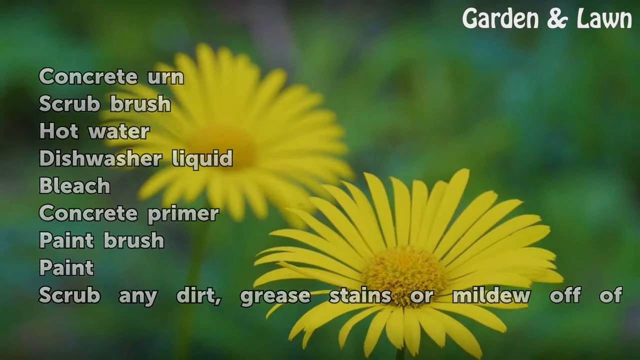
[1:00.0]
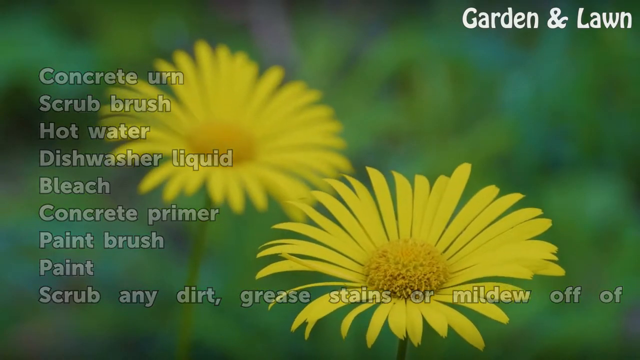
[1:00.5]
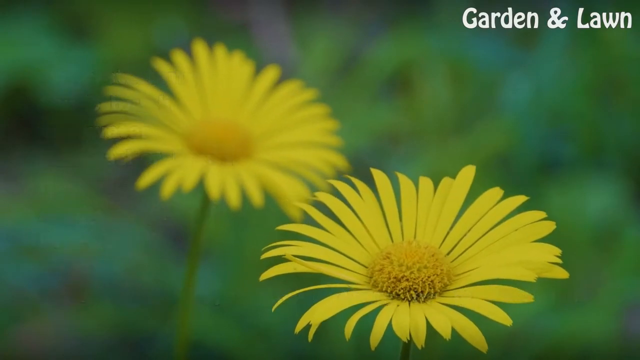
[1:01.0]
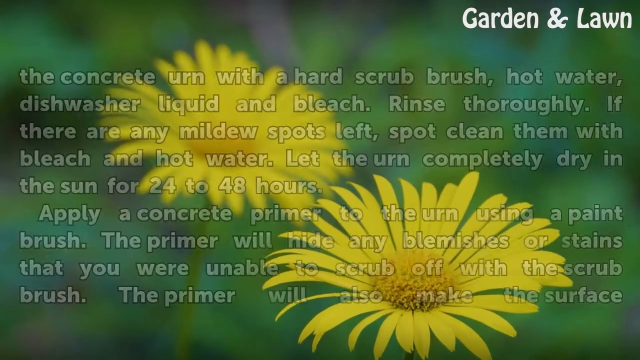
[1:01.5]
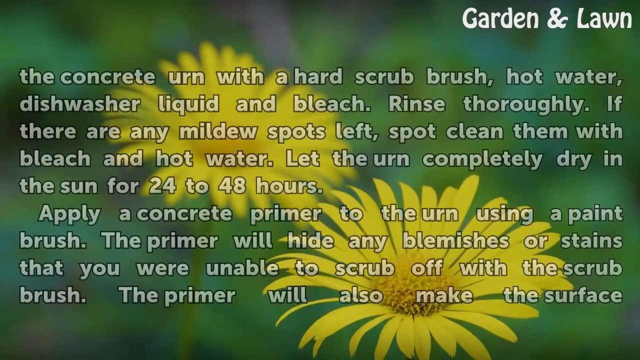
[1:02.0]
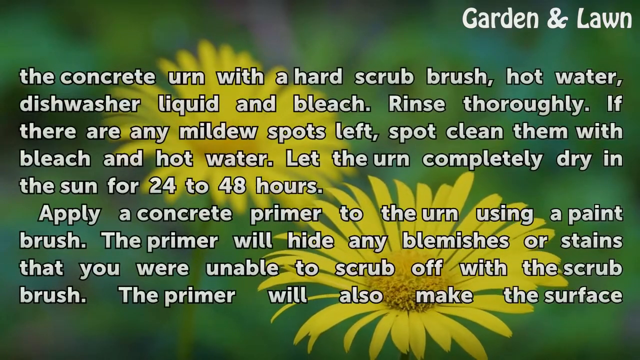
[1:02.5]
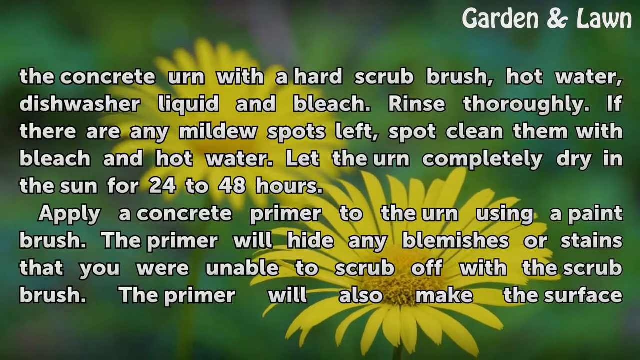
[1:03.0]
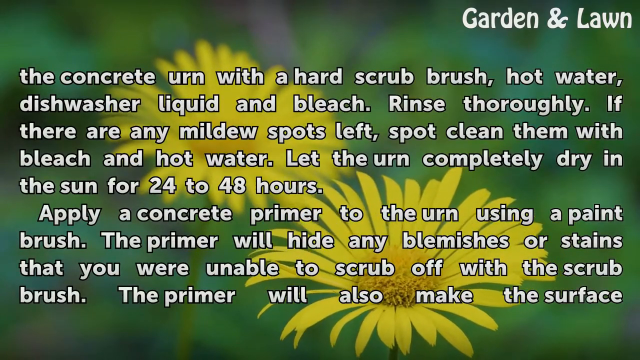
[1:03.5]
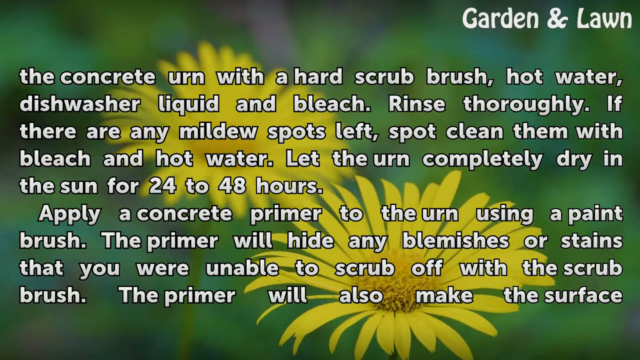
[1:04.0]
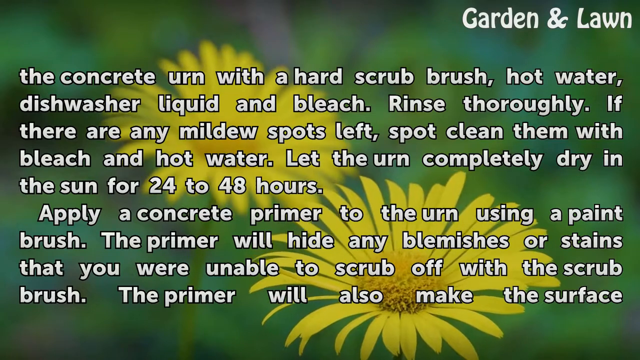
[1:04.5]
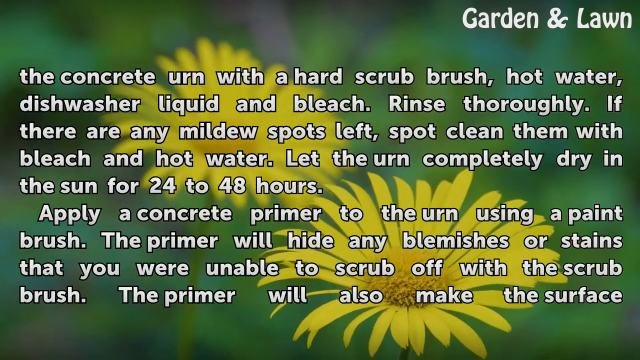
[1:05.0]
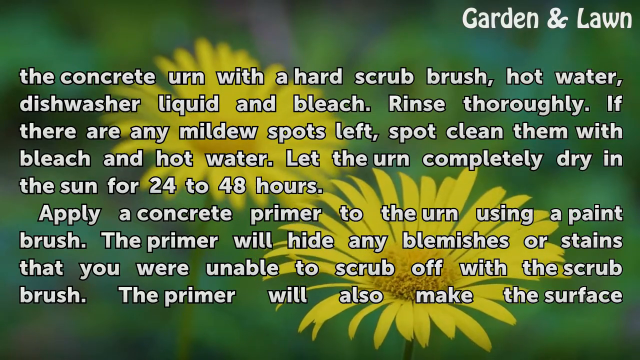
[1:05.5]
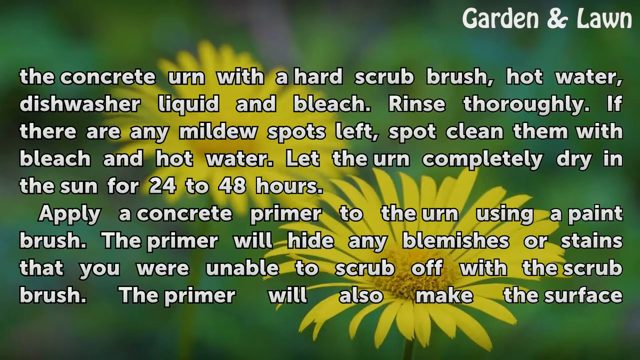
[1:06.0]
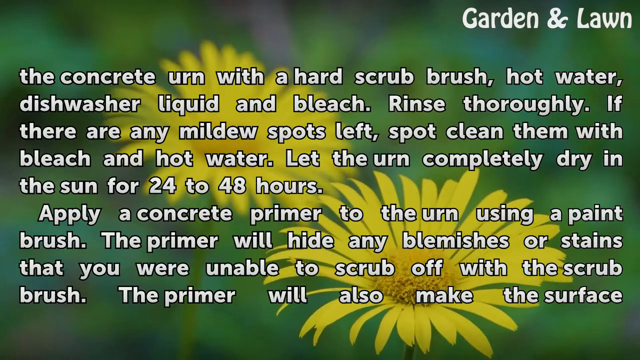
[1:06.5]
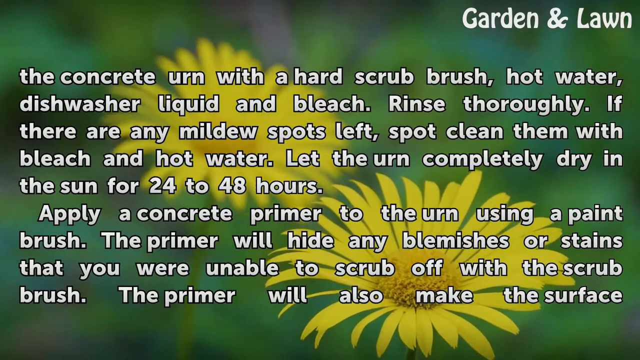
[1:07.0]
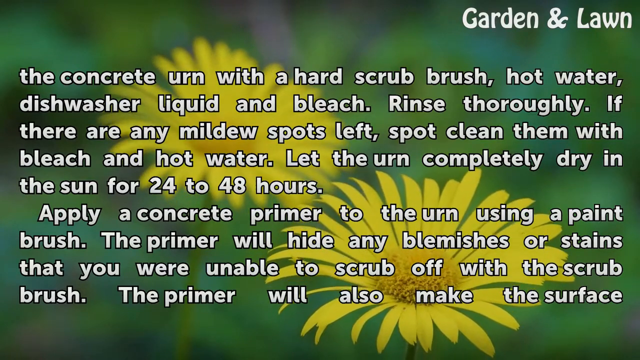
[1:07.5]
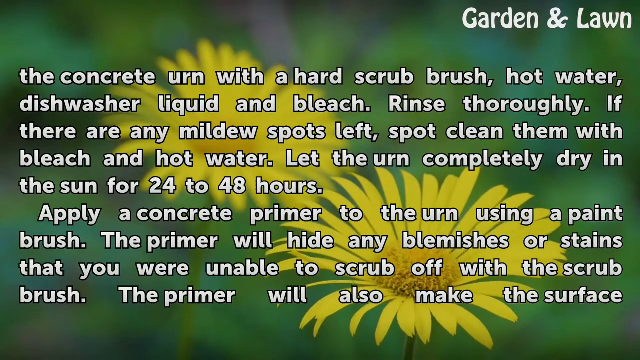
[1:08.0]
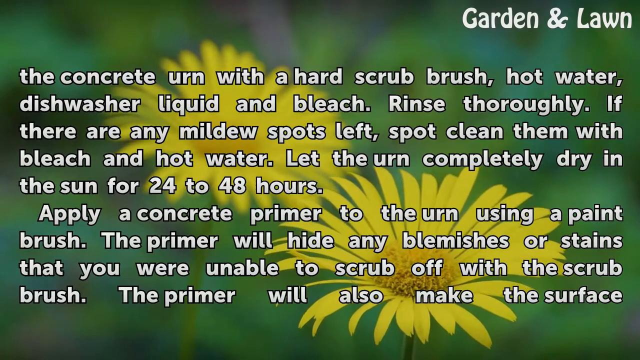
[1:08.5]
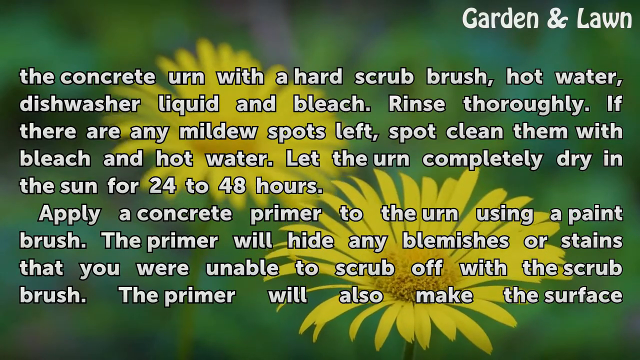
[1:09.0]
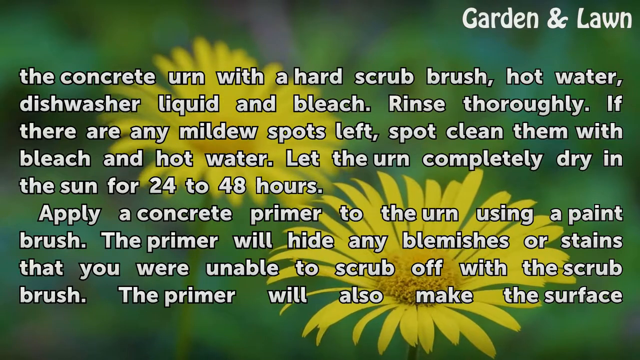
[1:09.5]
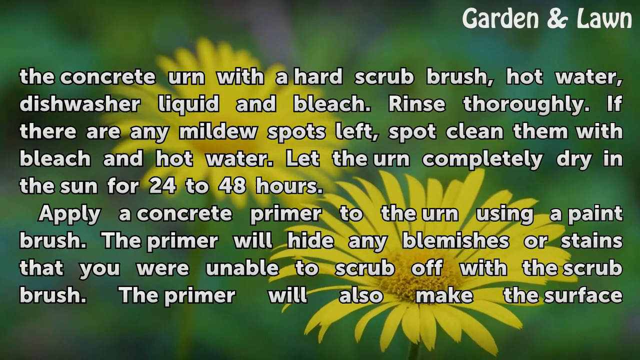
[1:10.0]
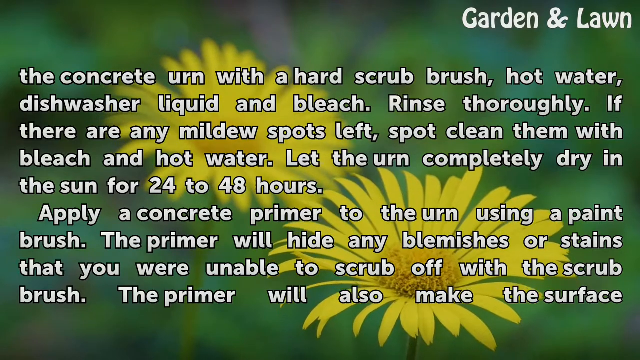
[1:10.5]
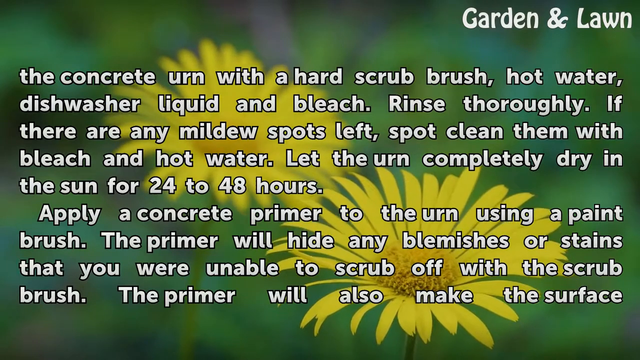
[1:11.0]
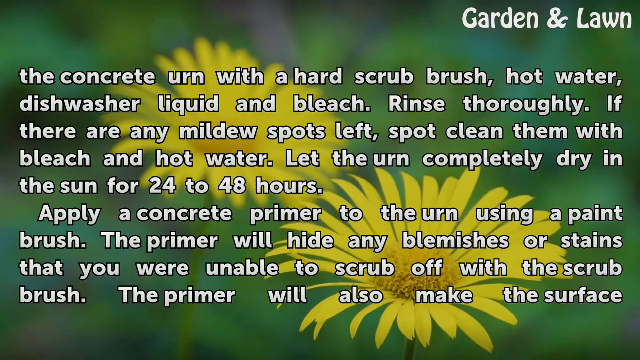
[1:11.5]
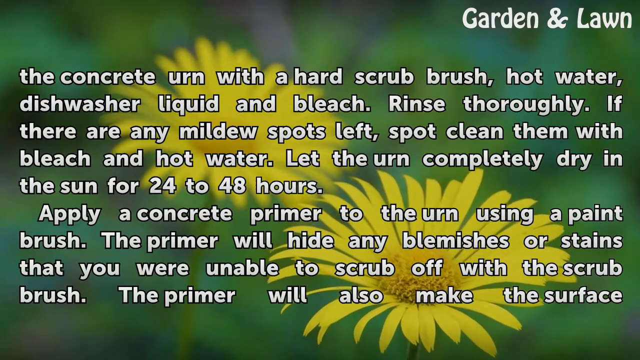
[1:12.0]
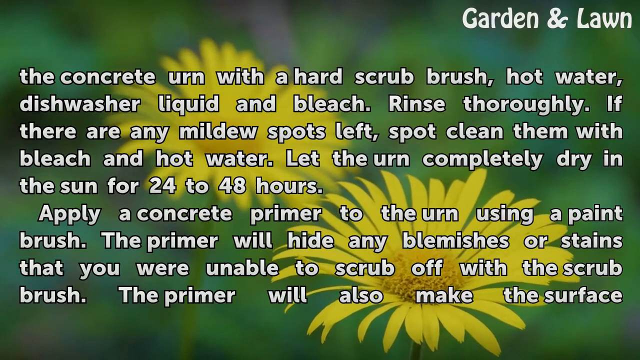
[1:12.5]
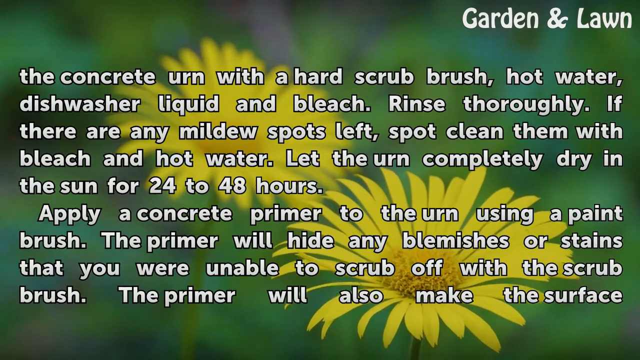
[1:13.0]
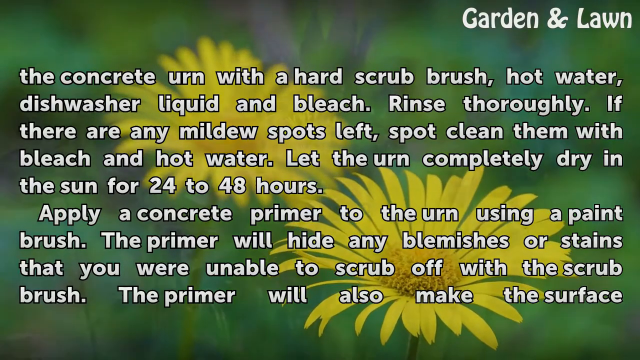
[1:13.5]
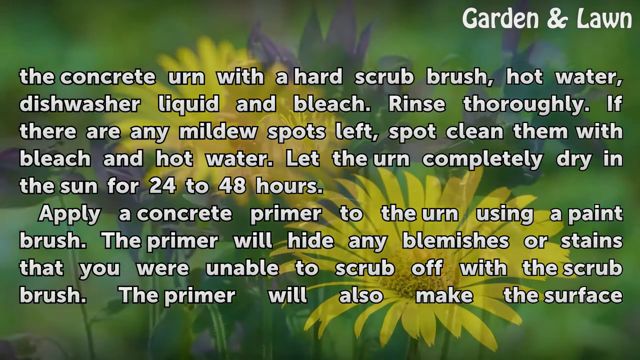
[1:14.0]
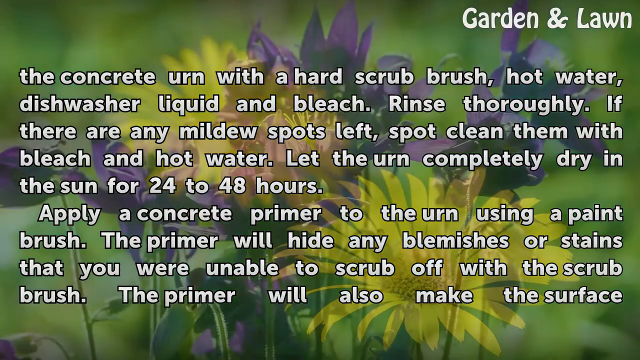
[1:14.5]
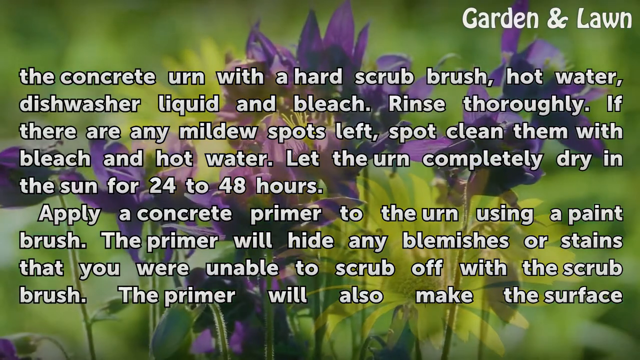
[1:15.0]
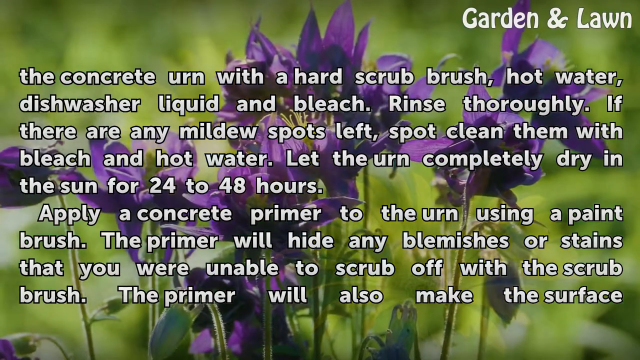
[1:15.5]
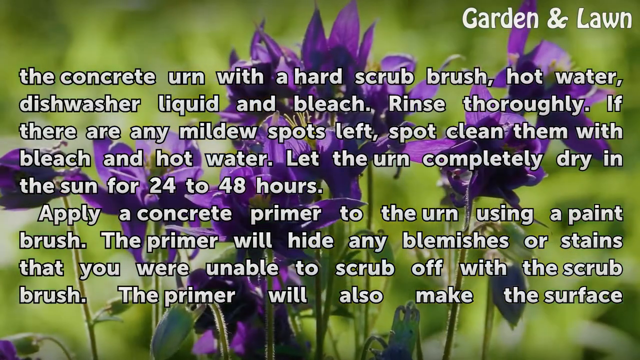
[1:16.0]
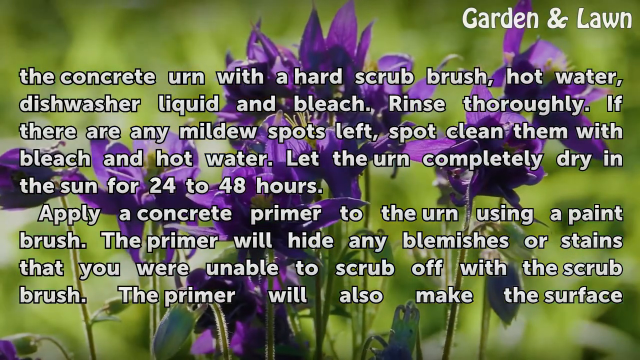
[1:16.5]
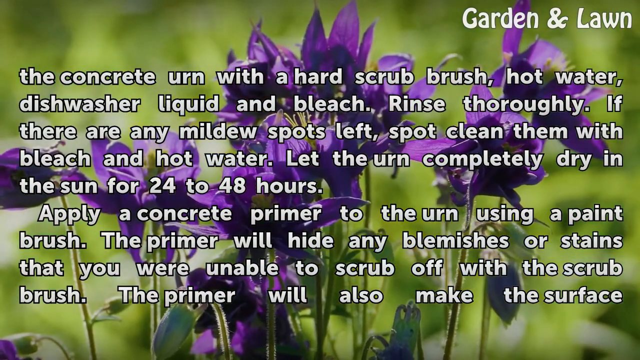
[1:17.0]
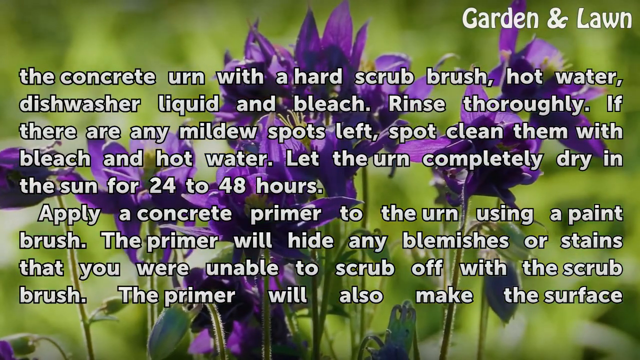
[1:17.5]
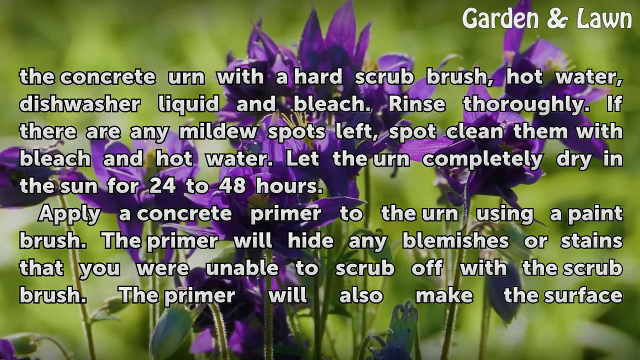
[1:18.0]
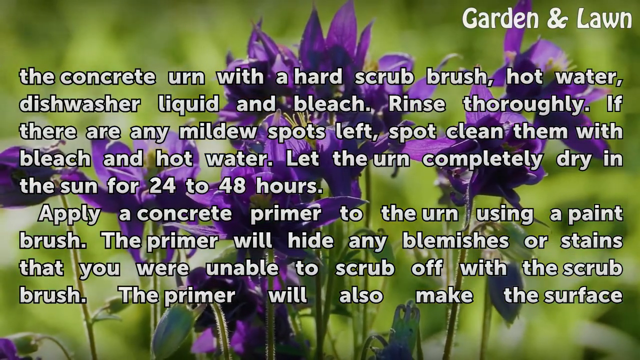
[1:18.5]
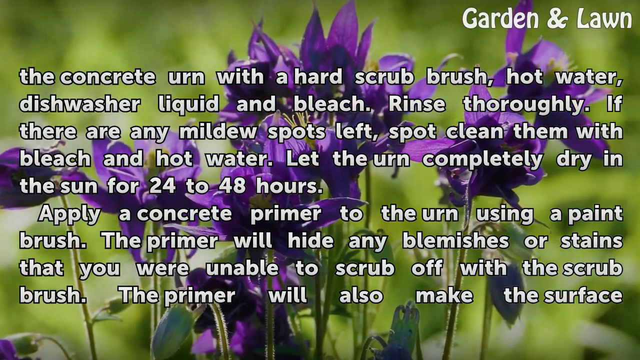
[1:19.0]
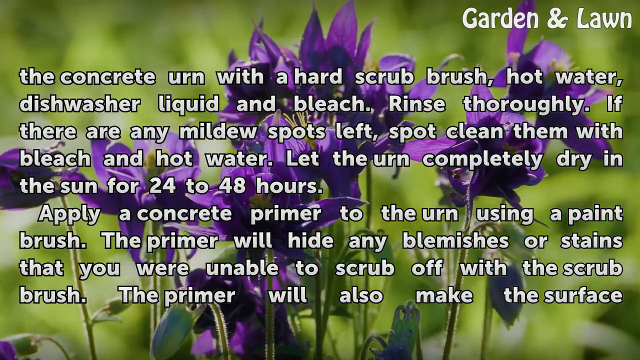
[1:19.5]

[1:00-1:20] The previous text fades out and new text with tips on how to do the project appears, taking up almost the entire screen. The background stays mostly the same, with the yellow flower as its main focus, until toward the end it transitions to a group of purple flowers of a completely different species. The text reads: "the concrete urn with a hand scrub brush, hot water, dishwasher liquid, and bleach. Rinse thoroughly. If there are any mildew spots left, spot clean them with bleach and hot water. Let the urn completely dry in the sun for 24 to 48 hours. Apply a concrete primer to the urn using a paintbrush. The primer will hide any blemishes or stains that you were unable to scrub off with a scrub brush. The primer will also make the surface," and it cuts off there as the purple flowers come in.